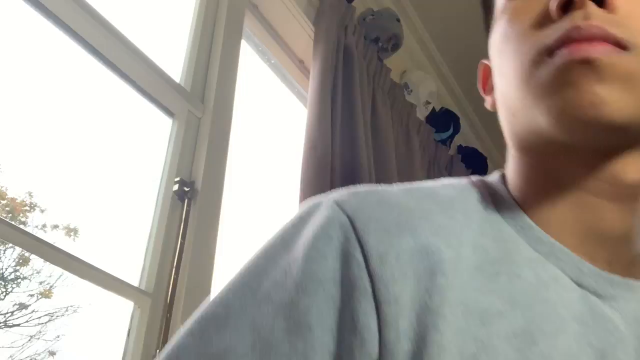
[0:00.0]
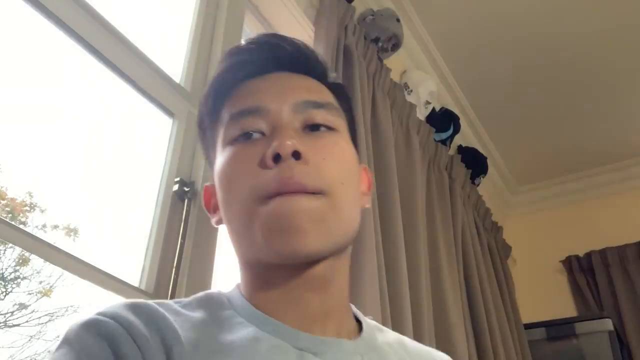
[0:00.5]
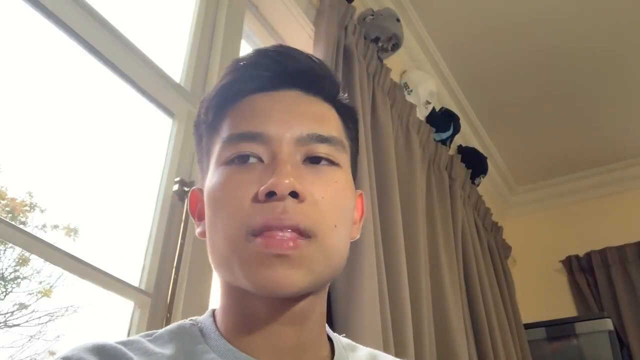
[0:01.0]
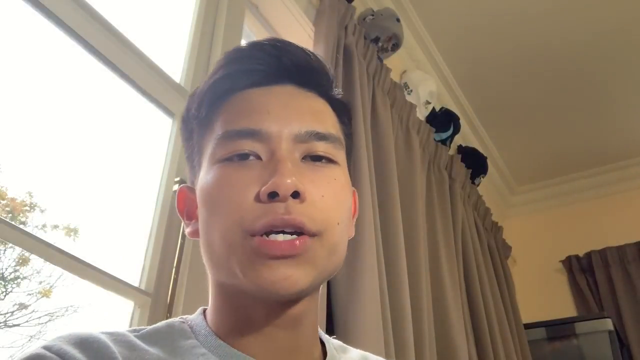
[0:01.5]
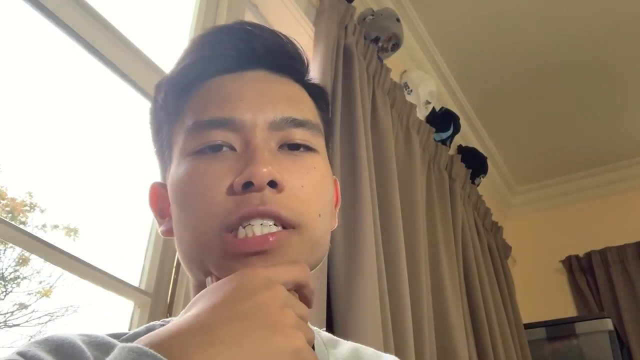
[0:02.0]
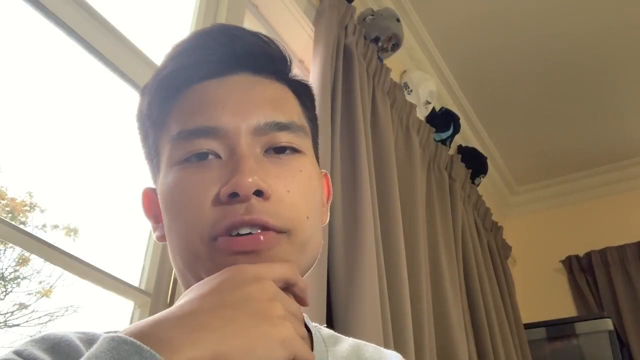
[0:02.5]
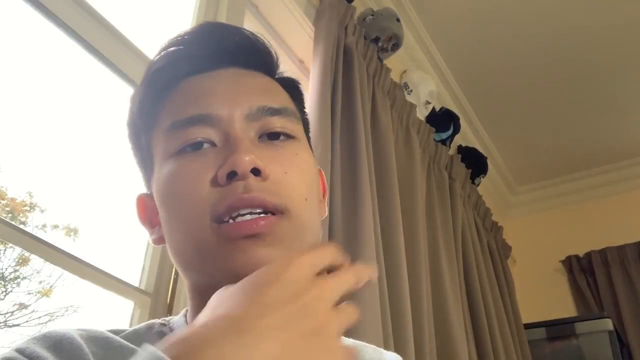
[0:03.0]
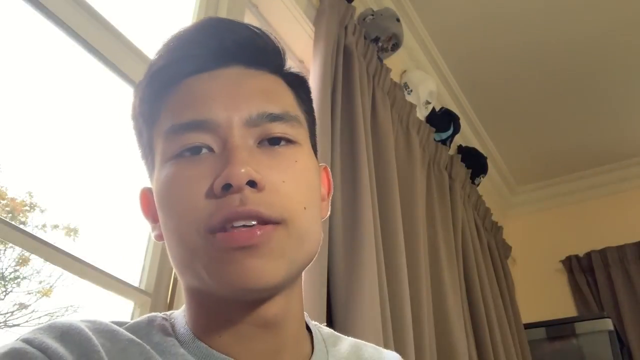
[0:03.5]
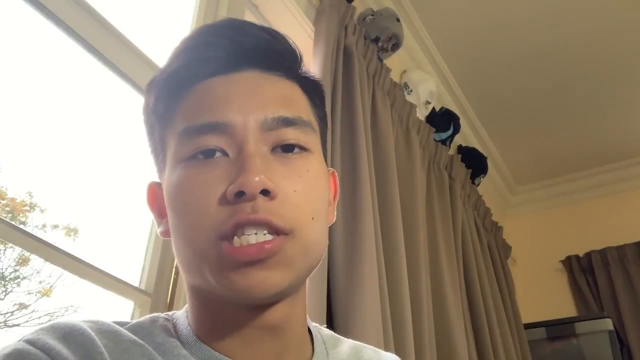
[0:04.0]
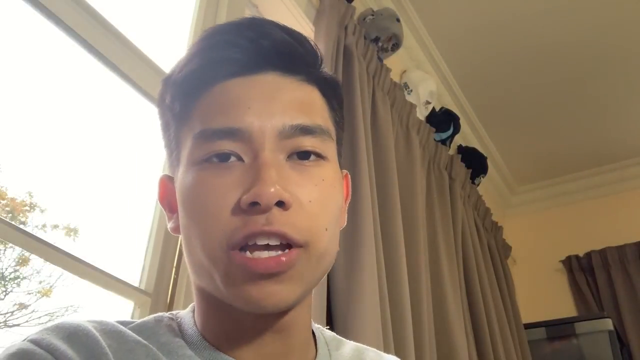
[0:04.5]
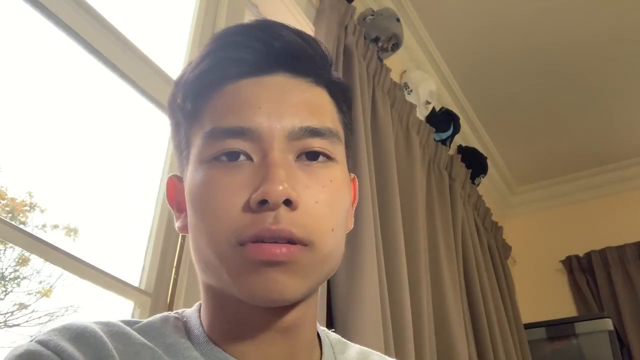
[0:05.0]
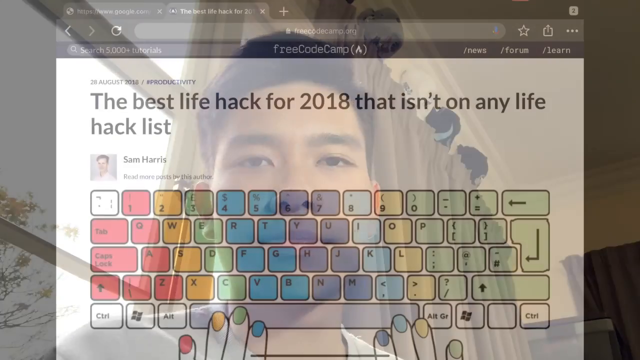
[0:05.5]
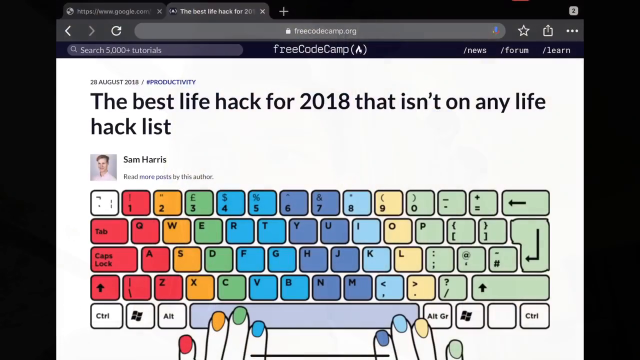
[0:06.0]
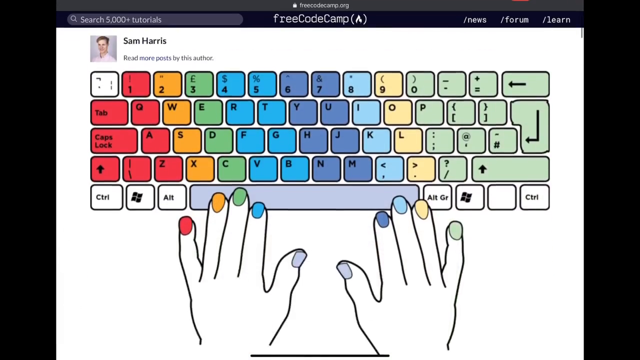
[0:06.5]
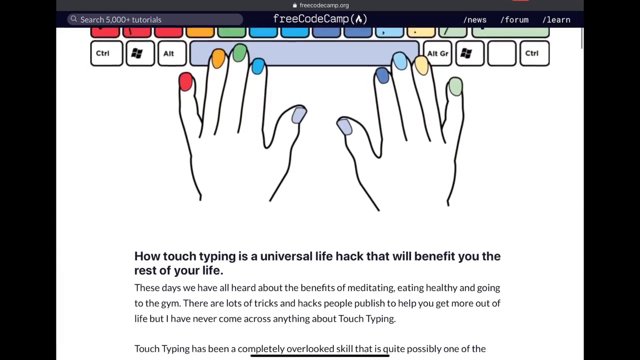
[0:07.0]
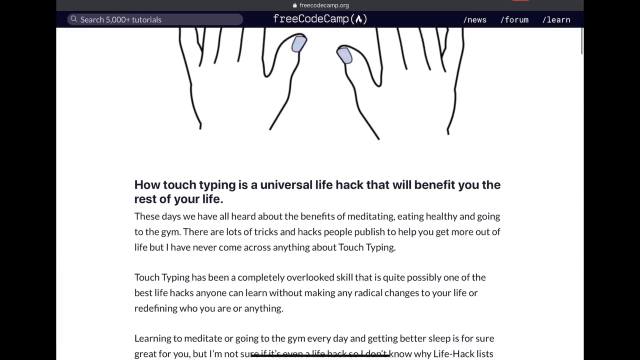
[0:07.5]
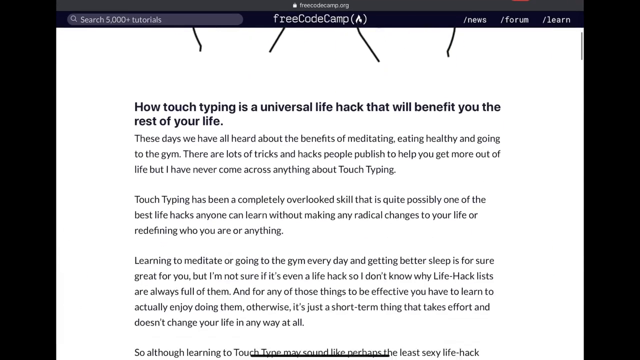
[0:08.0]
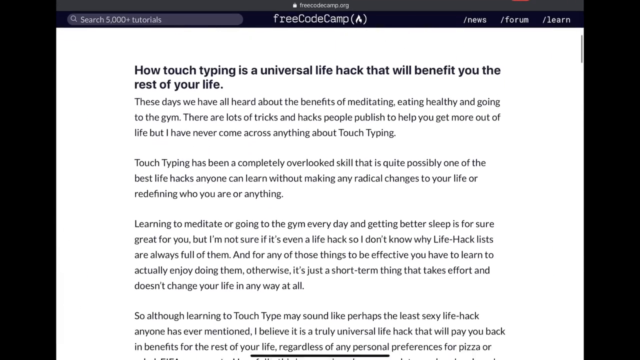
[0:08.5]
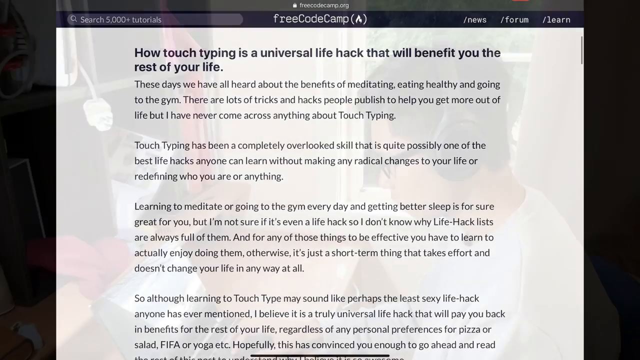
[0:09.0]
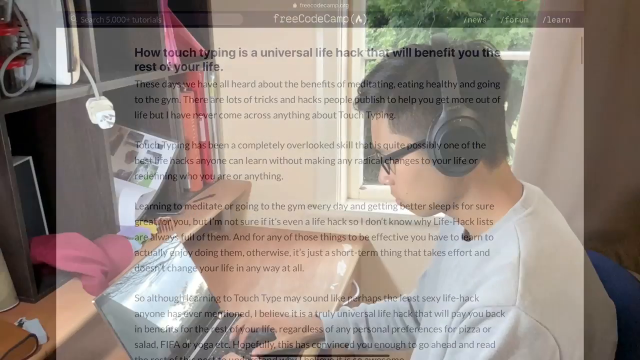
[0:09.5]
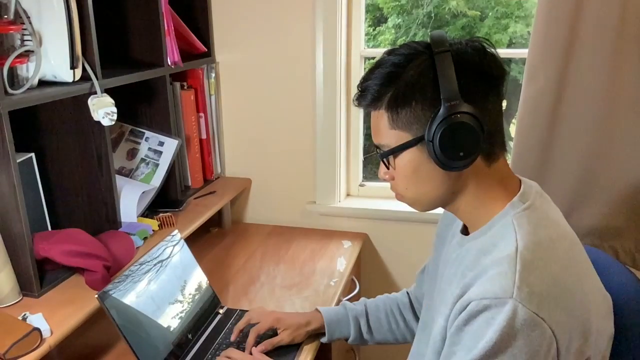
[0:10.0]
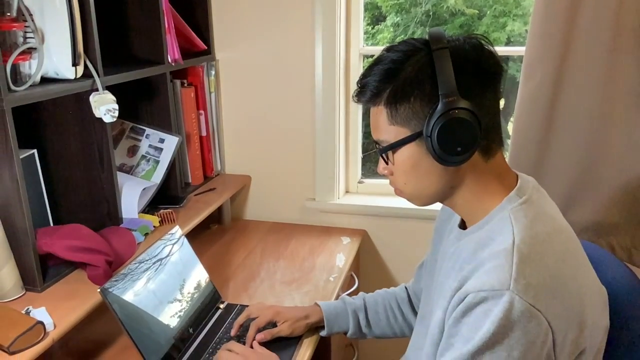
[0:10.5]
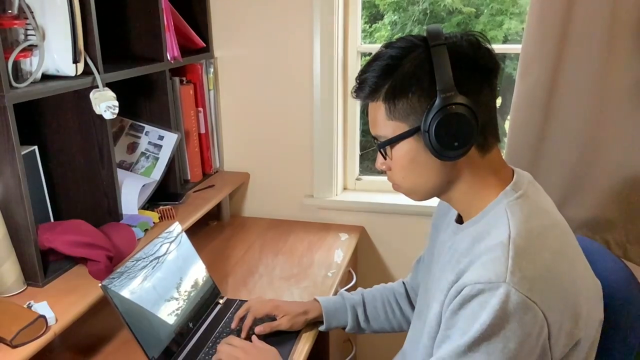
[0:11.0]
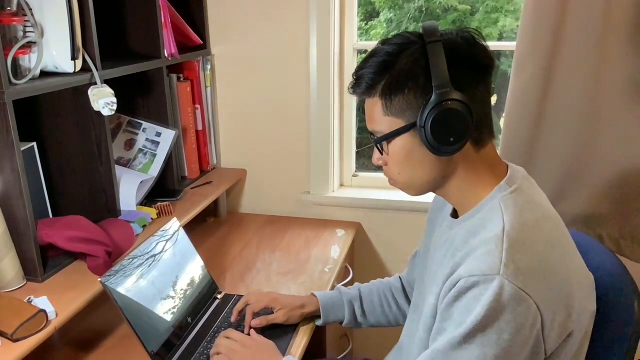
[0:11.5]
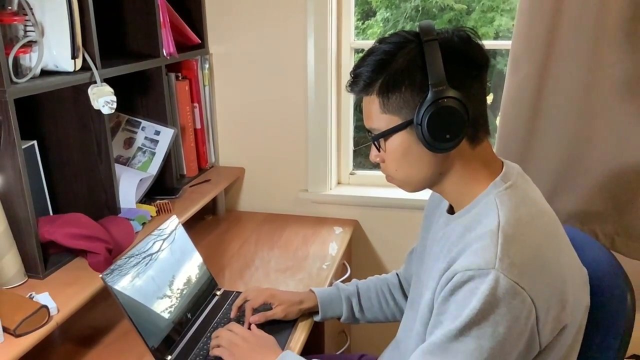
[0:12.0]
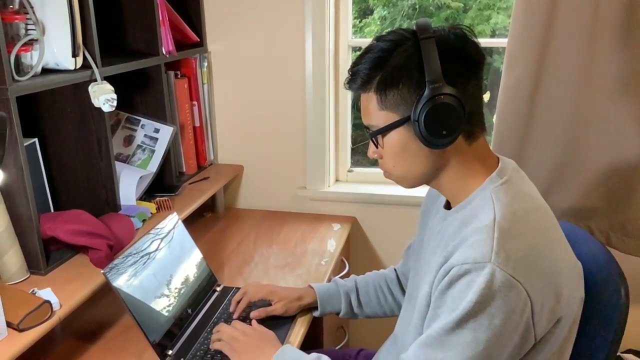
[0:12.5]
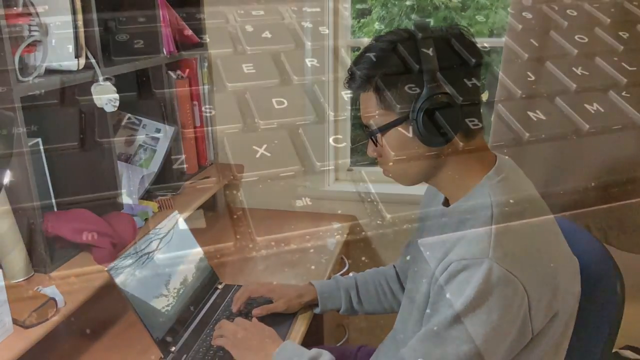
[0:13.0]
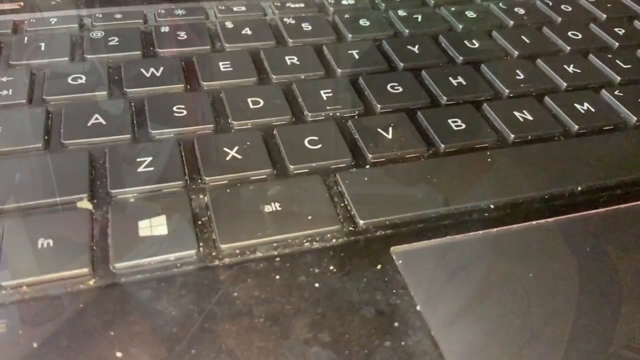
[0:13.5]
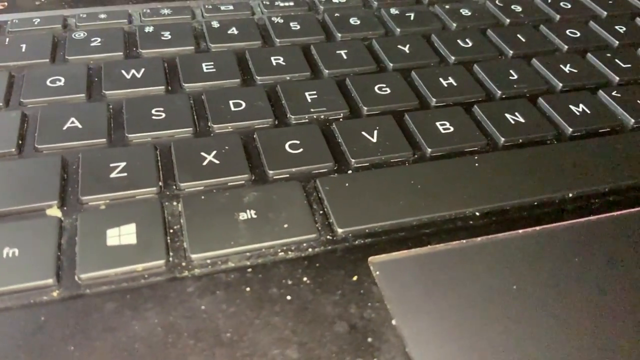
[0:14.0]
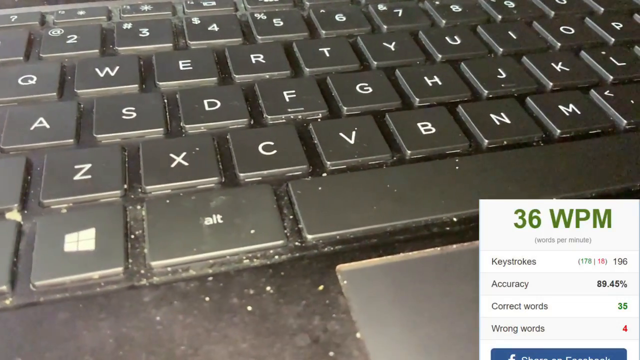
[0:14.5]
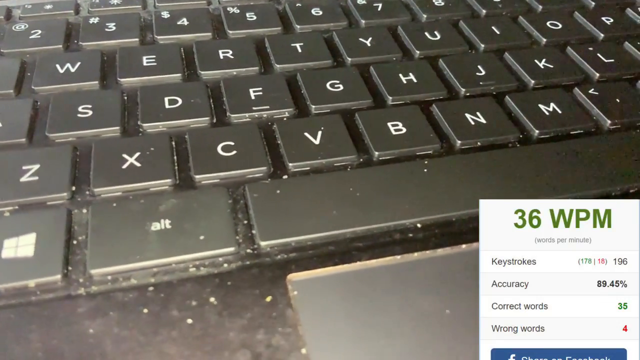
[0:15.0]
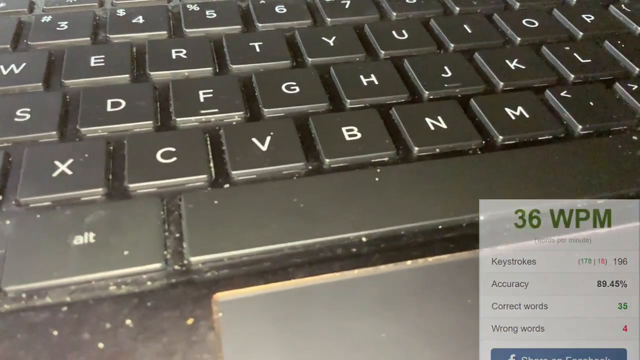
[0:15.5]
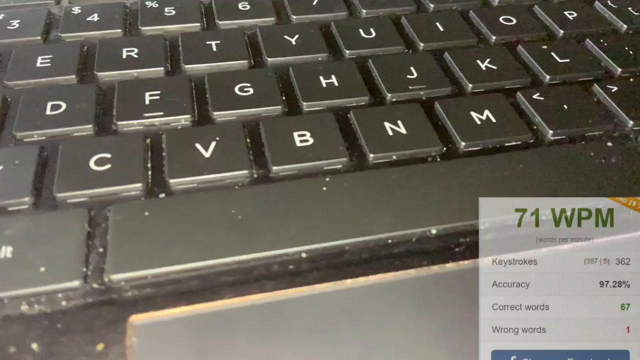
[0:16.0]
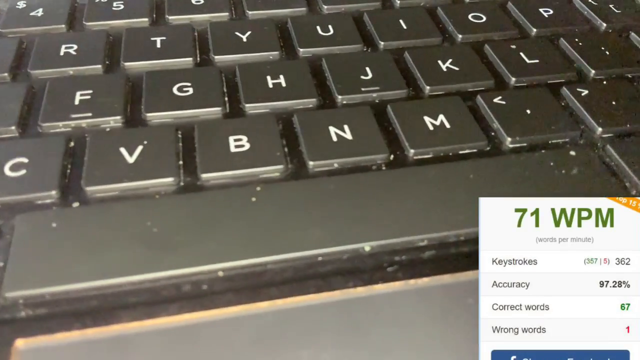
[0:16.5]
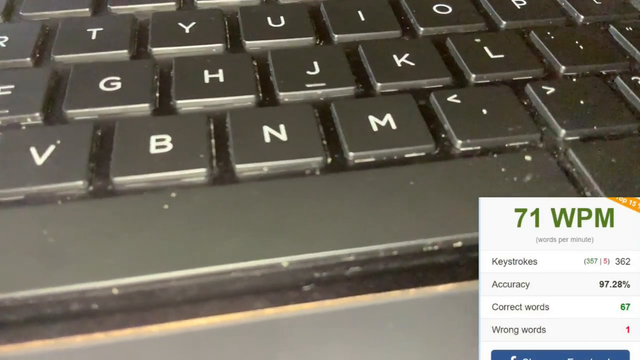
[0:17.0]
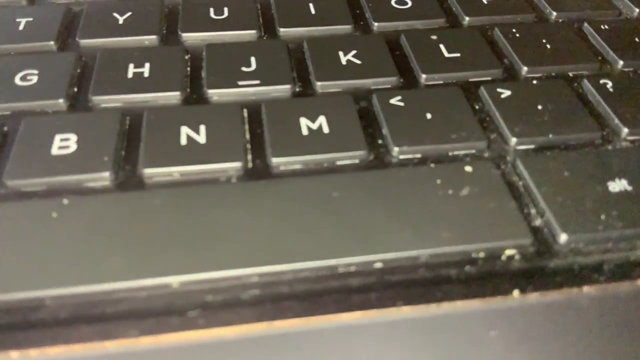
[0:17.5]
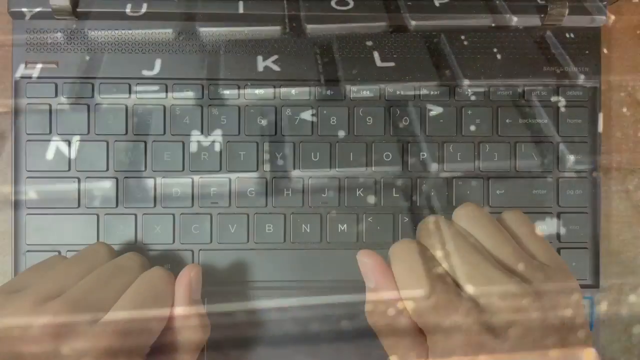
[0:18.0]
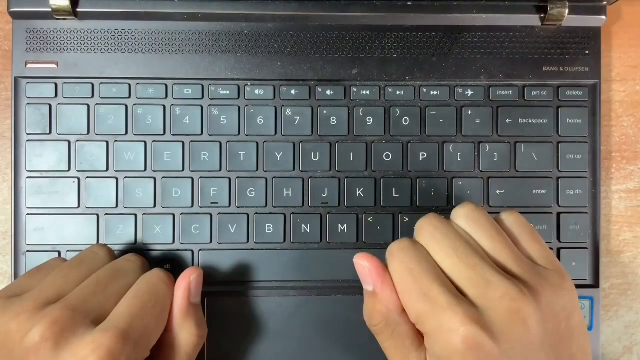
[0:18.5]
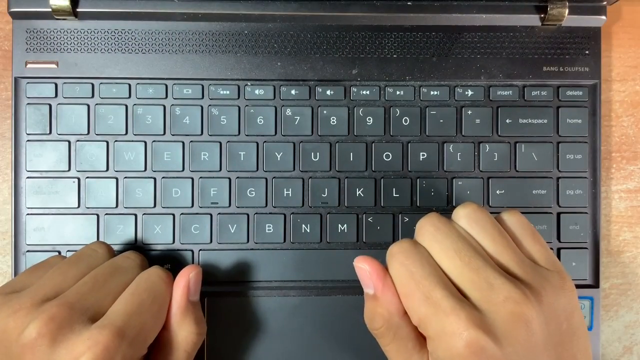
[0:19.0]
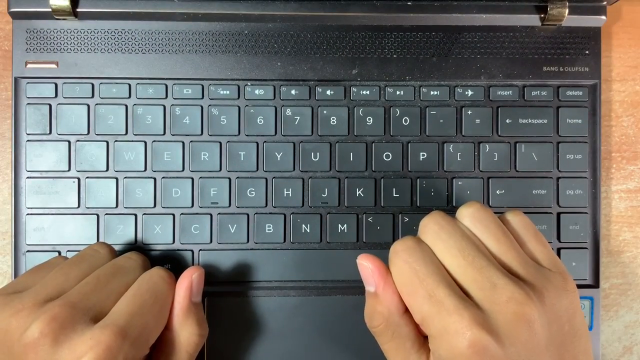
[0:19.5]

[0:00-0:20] An Asian man pops in from the right side of the screen and lands with his face around the center of the screen. He starts talking to the camera with a little emotion on his face and makes a small hand gesture after touching his chin and bringing his hand down off the camera. The scene fades to a website called Free Code Camp, which shows the best life hack for 2018 that isn't on any hack list. There is an image of a keyboard with rainbow colors on it, with some information at the top and below. The video then transitions to a scene outside the laptop where the man is typing on his laptop, focused on it, before switching to the camera panning across his keyboard. In the bottom right corner of the screen, "36 words per minute" pops up with statistics about it, then disappears; in the same position, "71 words per minute" then pops up with its statistics. After that disappears, an overhead view of his keyboard shows his knuckles out, getting ready to type.